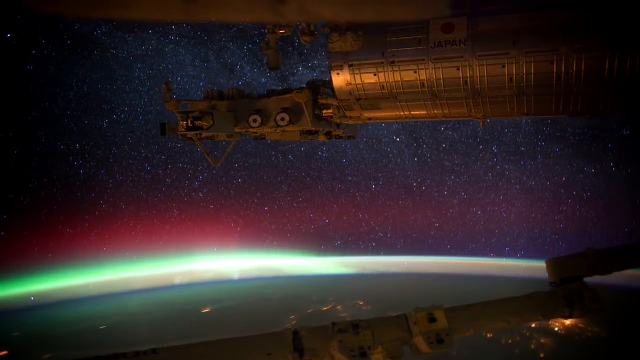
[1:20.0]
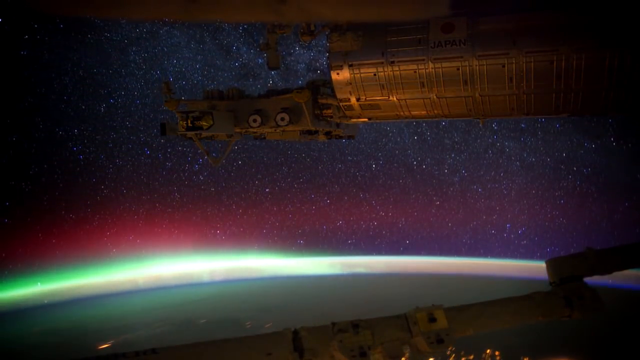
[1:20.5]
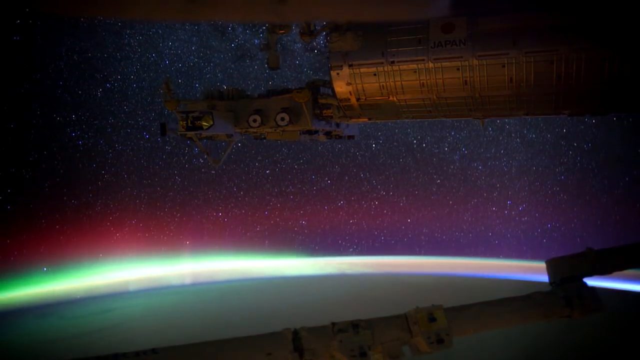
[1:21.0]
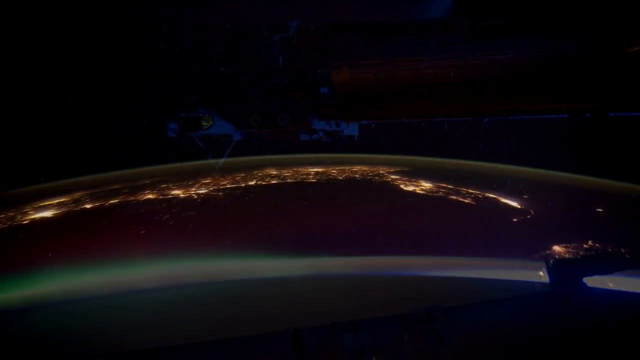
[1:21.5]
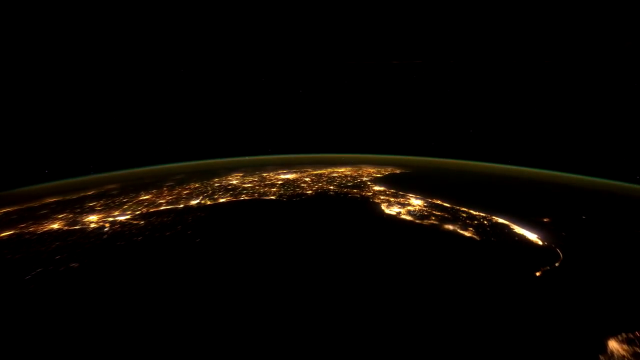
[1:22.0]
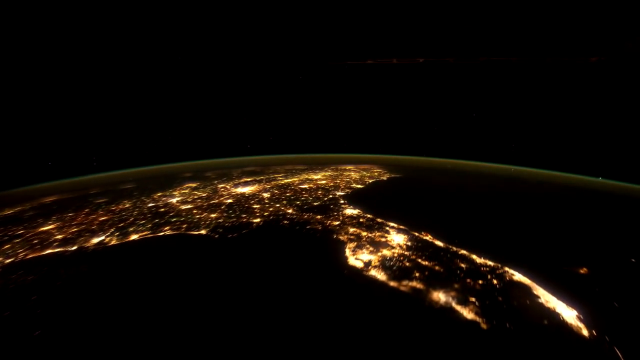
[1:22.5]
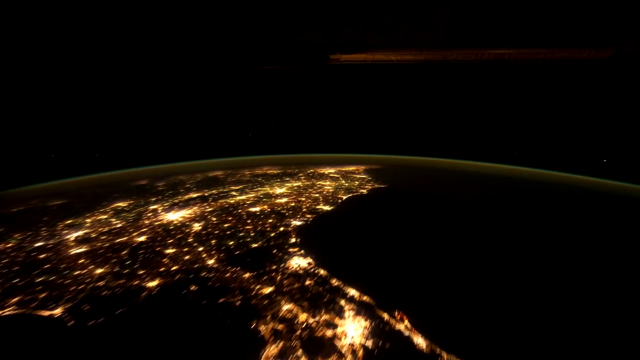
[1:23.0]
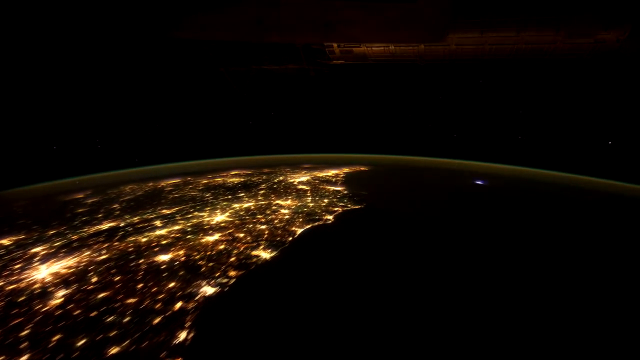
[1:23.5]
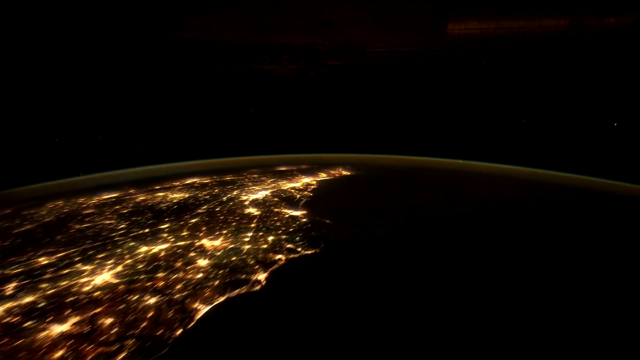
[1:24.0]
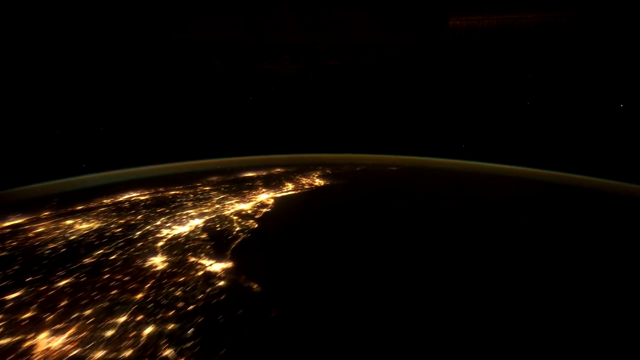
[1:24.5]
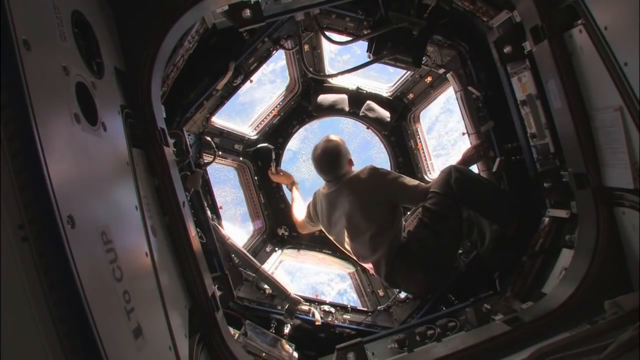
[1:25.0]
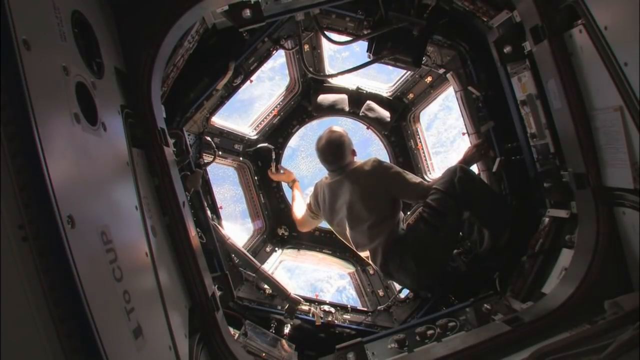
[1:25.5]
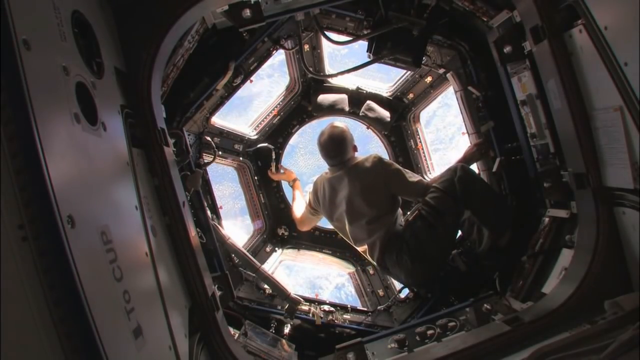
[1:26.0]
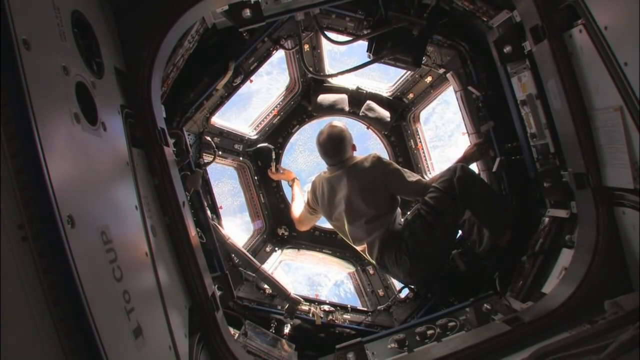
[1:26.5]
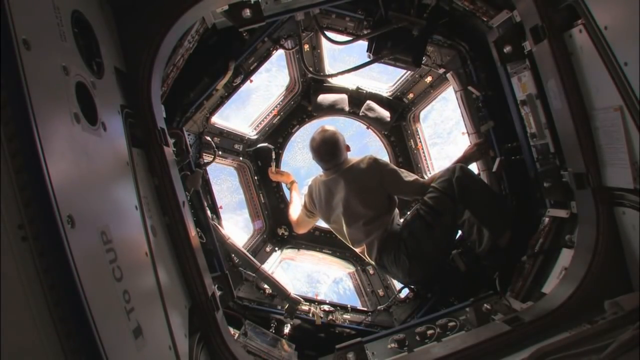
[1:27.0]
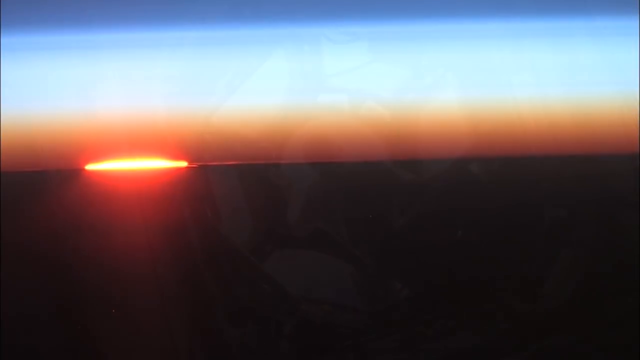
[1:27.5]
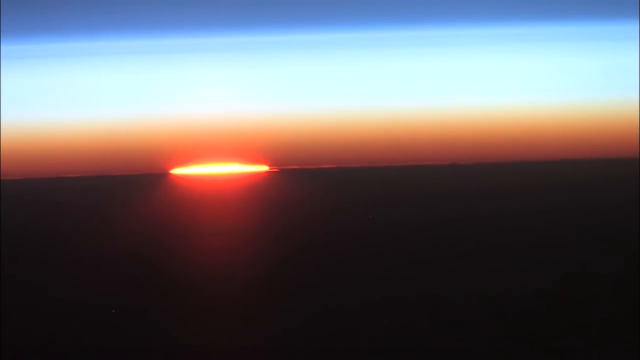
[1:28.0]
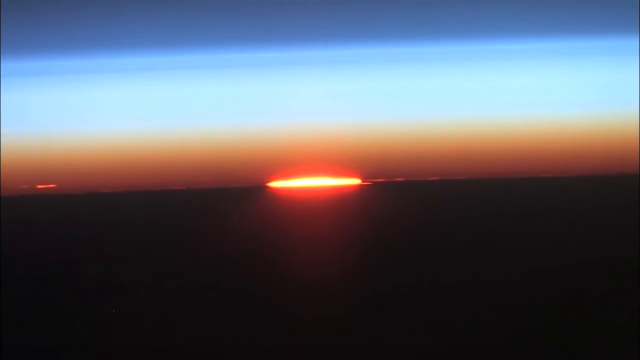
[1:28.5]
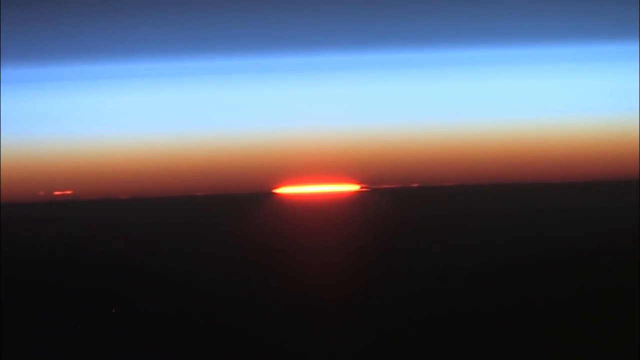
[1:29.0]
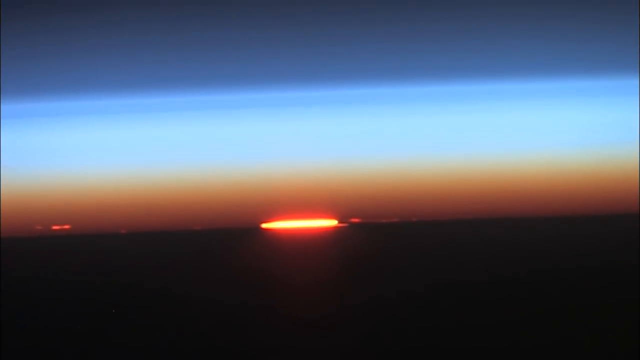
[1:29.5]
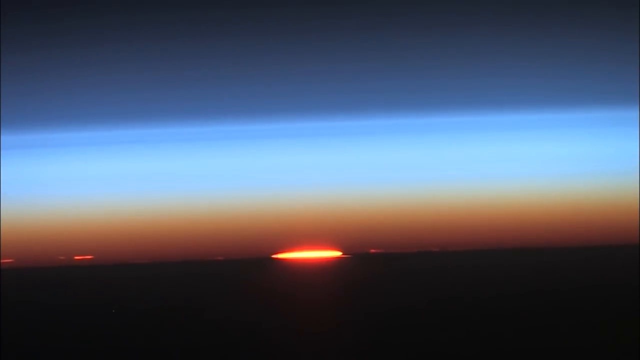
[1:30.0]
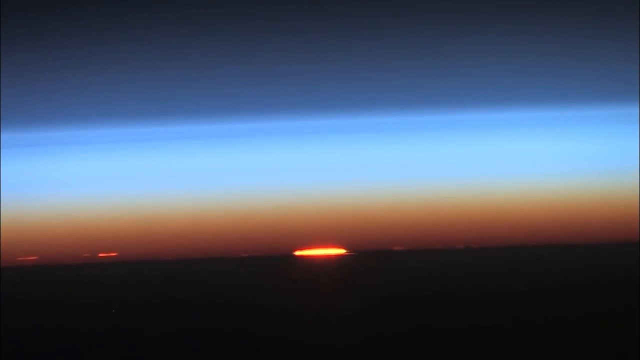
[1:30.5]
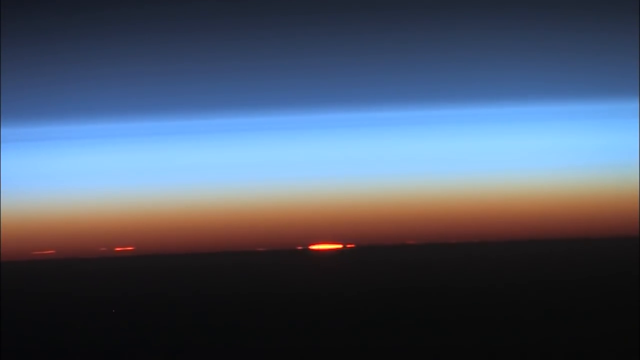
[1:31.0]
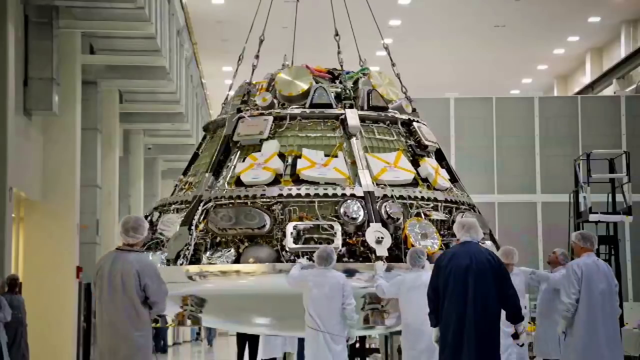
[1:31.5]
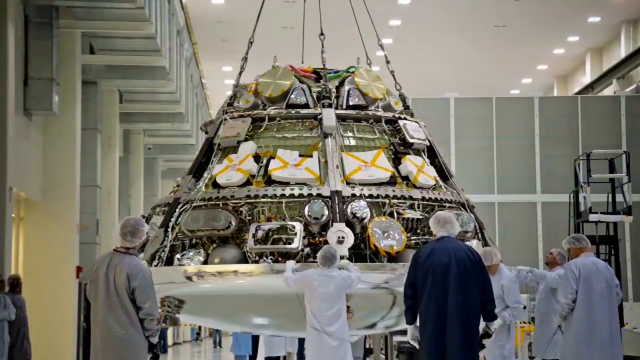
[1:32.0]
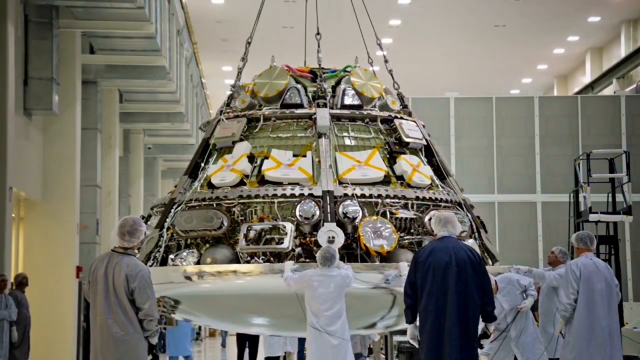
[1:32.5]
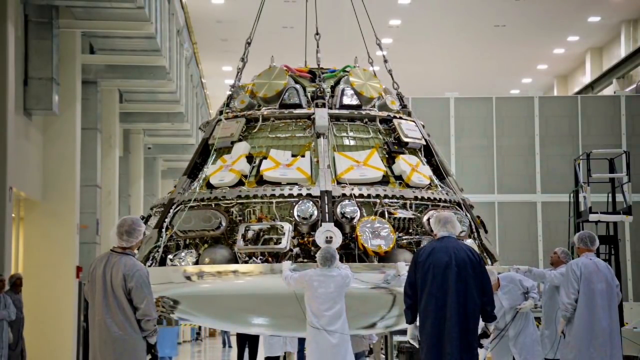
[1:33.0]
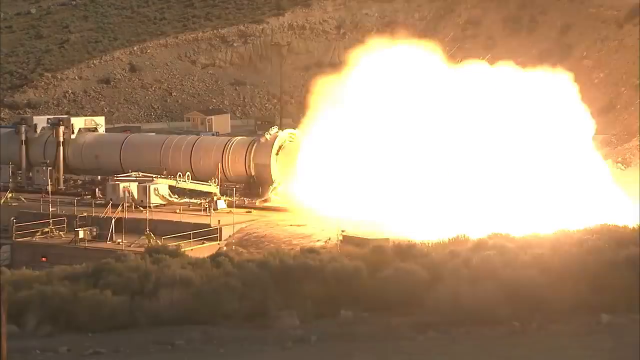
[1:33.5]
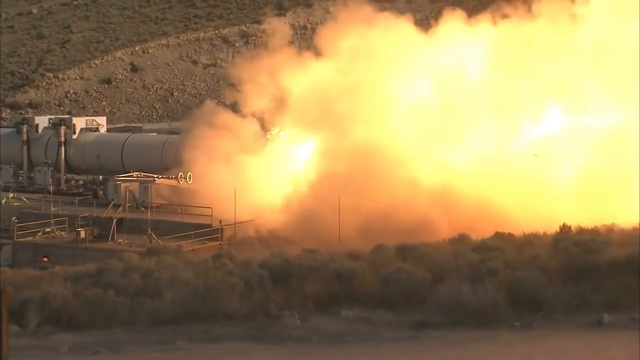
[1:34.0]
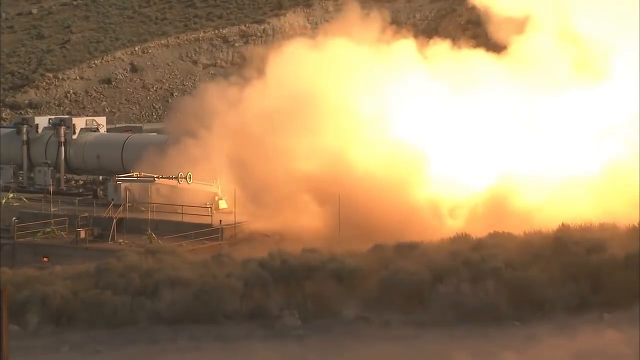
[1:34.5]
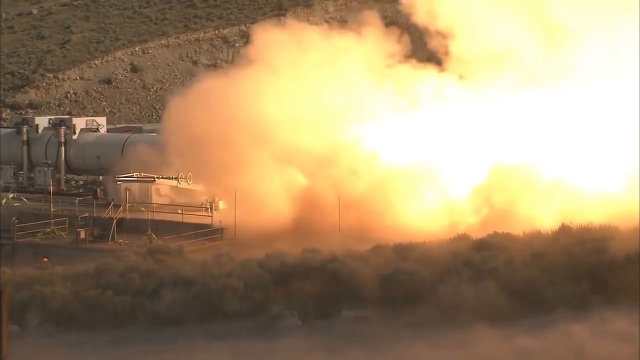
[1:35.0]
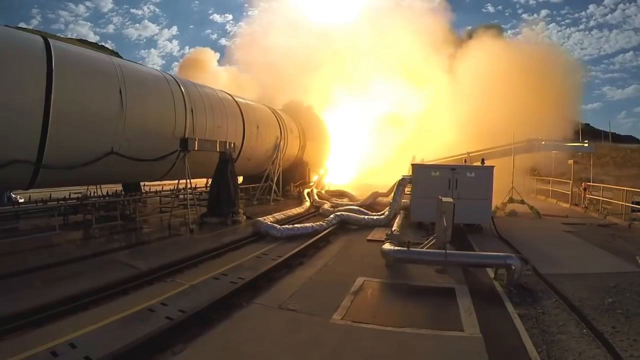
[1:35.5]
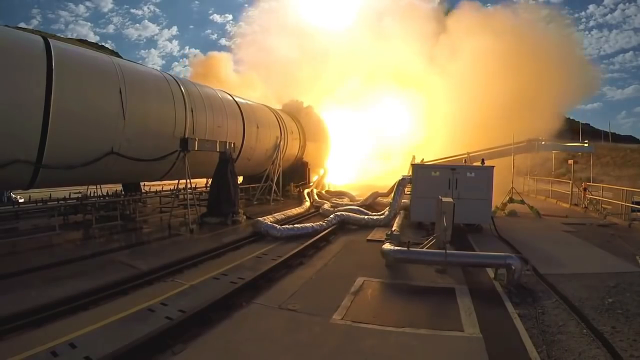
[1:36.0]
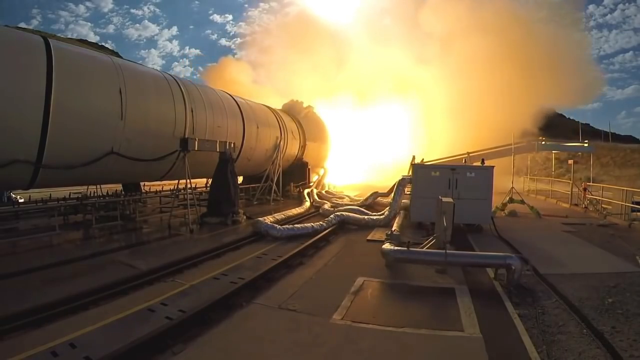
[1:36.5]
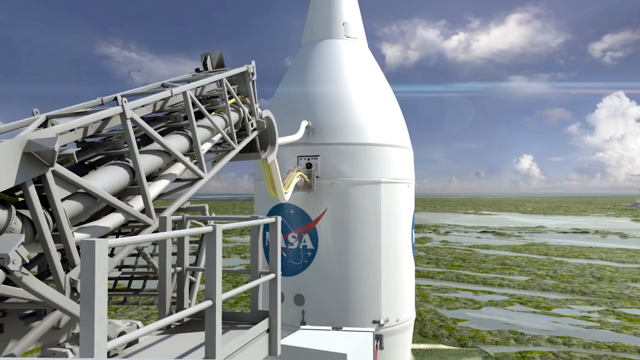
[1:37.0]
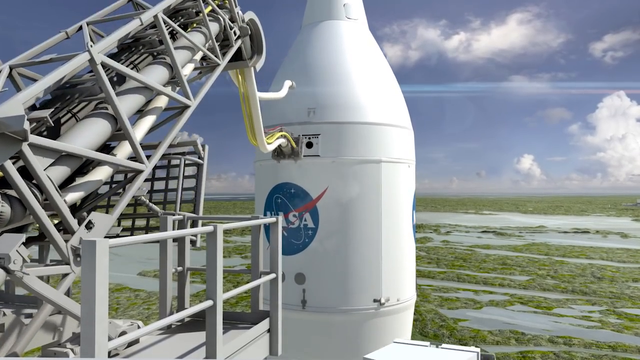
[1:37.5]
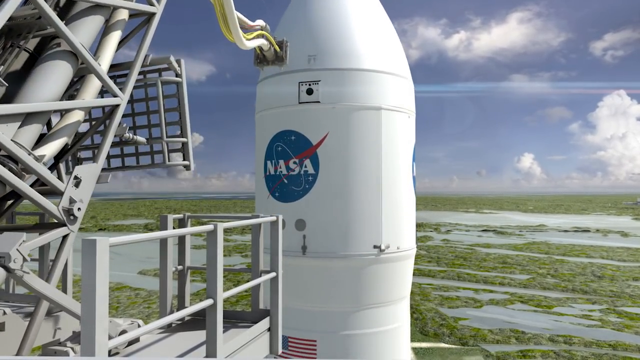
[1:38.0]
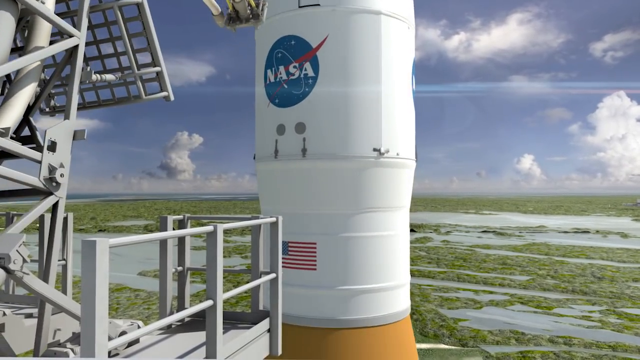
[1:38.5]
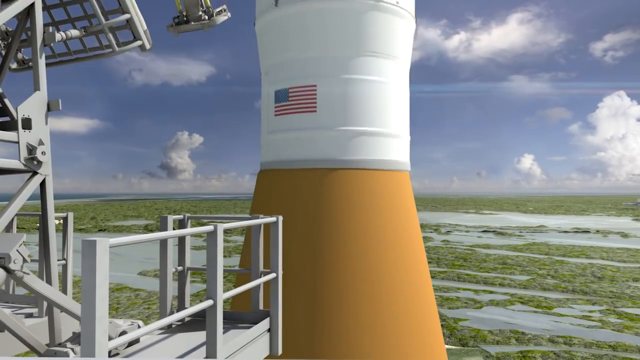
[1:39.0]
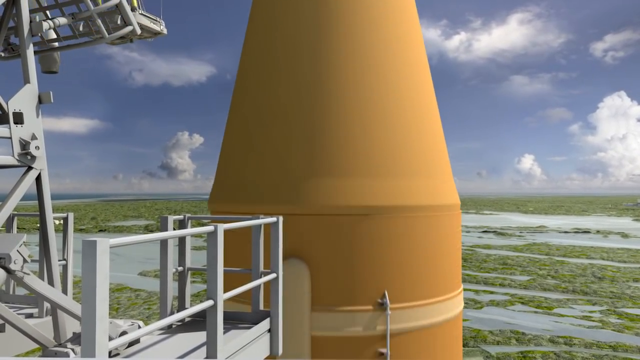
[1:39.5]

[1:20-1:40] The satellite shaped like the letter H continues, with some of it on the right side of the screen. At the bottom, a green film covers the Earth. Next is an animated Earth that looks black with very white lights on it. Then someone appears to be inside the rocket ship without protective gear; a man floats a little and holds on to the side. A horizon that is orange and blue appears in a zooming image of a part of the Earth that looks a little like a sunrise. A big piece of equipment that is part of the rocket ship seems to be surrounded by a lot of people and being tested. Finally, a rocket ship takes off with "NASA" on its left side.